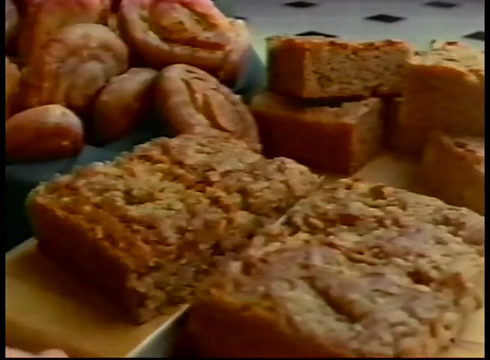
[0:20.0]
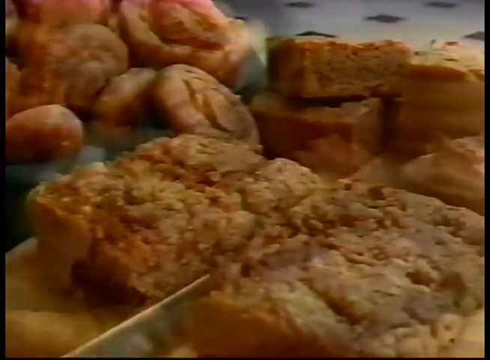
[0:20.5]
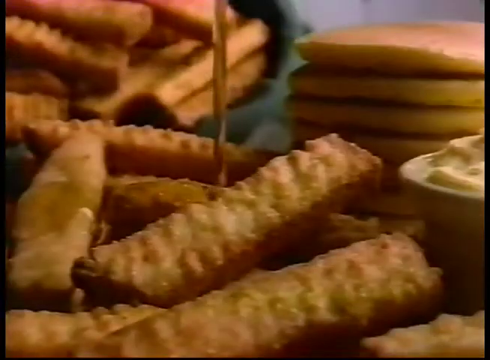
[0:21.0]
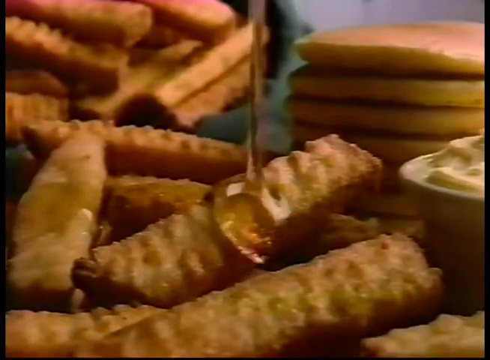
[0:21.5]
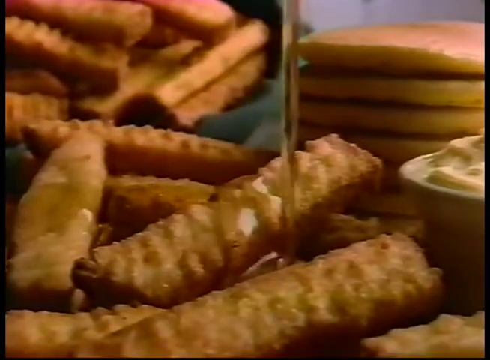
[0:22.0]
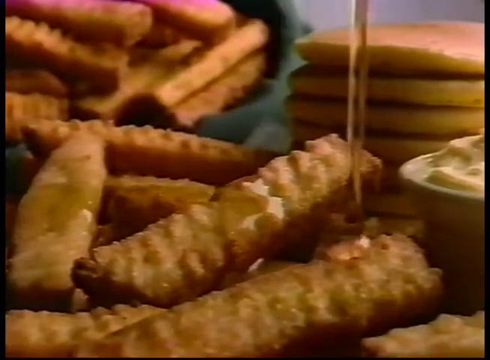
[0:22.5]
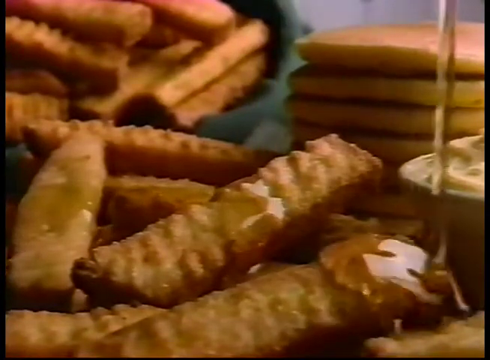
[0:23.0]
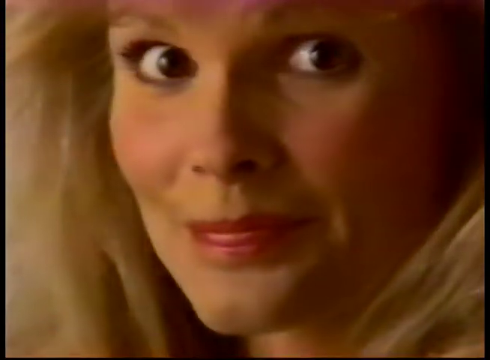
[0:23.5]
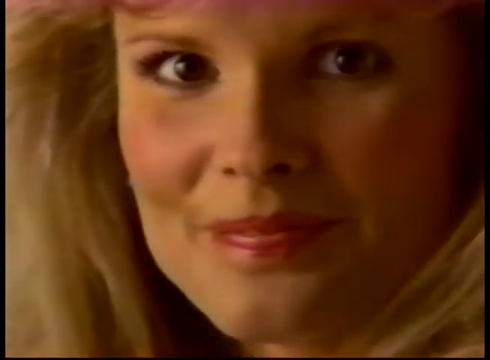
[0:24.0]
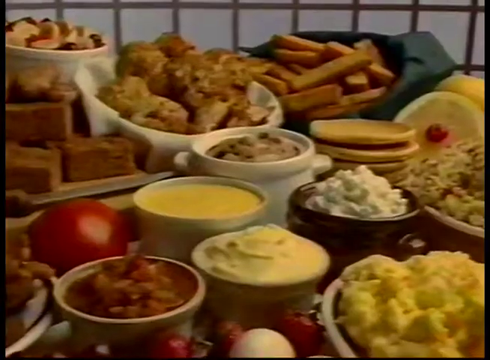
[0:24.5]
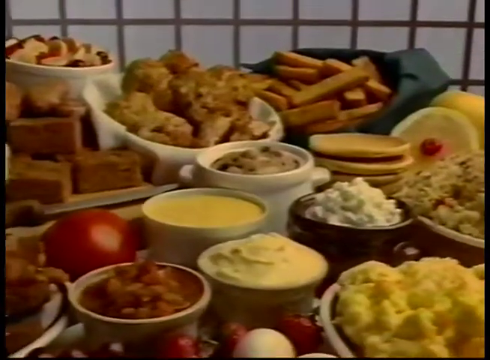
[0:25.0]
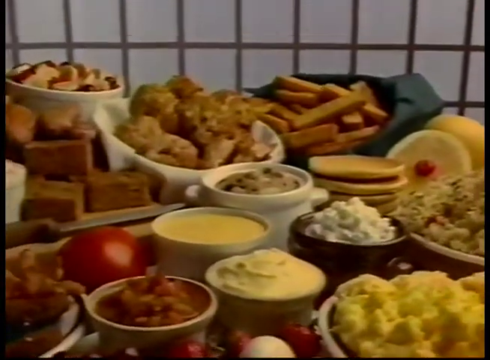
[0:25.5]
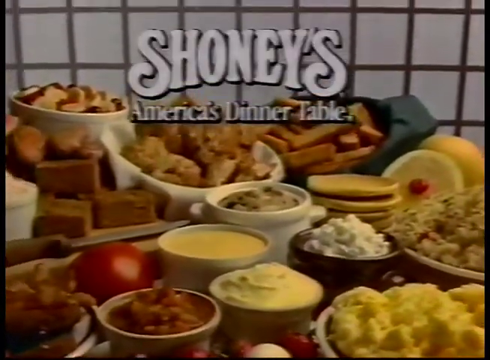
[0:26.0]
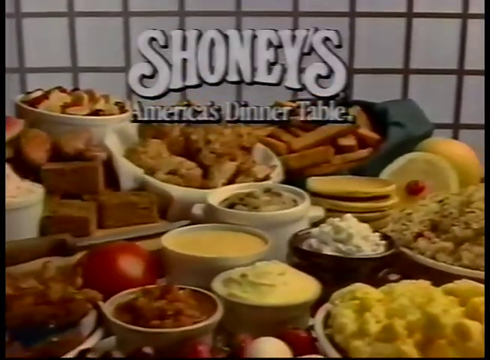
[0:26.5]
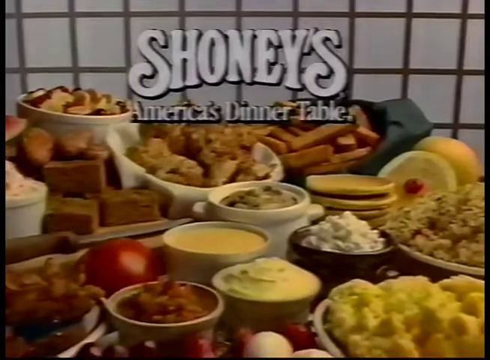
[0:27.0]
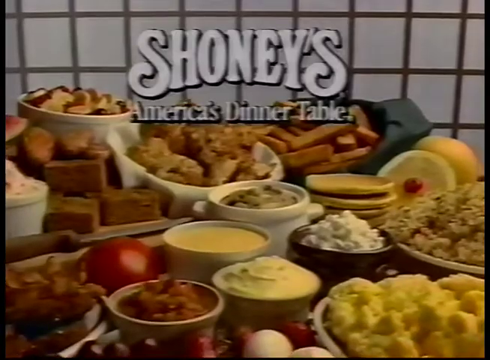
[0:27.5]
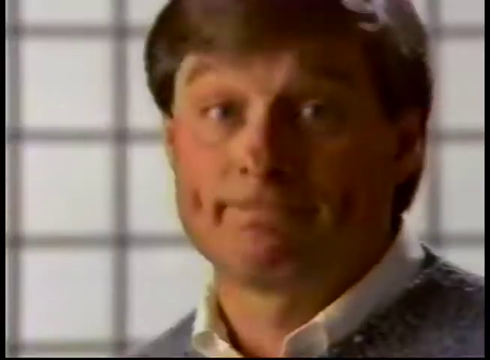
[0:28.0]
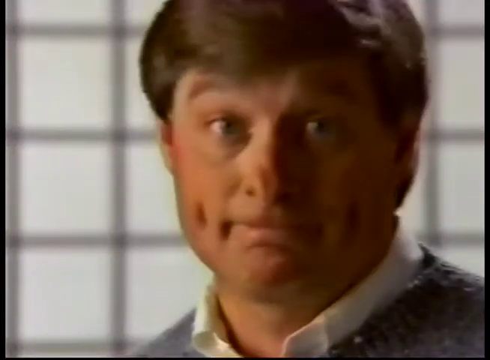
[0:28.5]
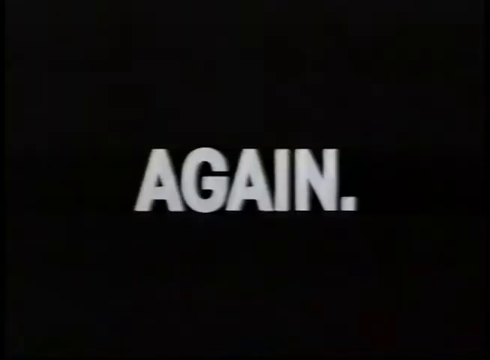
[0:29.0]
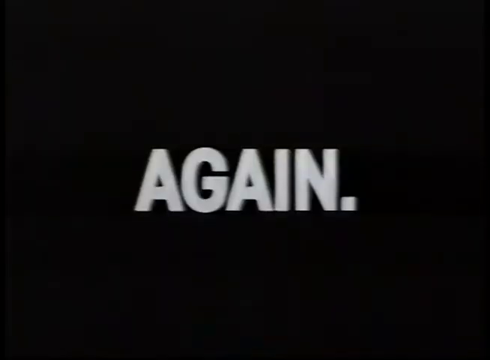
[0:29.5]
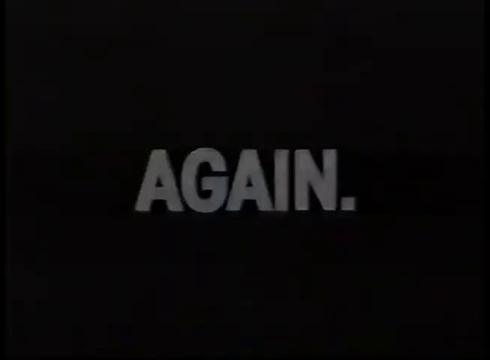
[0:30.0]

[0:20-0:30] The video appears to be slightly wider than it is tall. The camera looks down on some food: in the upper left is what looks like a pile of cinnamon rolls, and in the upper right what look like bricks of some kind of bread. Closer to the viewer is what looks like a different kind of bread, apparently made in some sort of pan; it is brown, has many cracks, and is cut exactly in half. The video moves to another screen with other food, with French toast sticks in the lower left. It then switches to a woman who looks like she is from the 80s, with big, poofy blonde hair, red lipstick and dark brown eyes; she is probably in her 30s and smiles at the camera. The final scene shows a large number of different food items on a table, with "Shoney's" at the top.